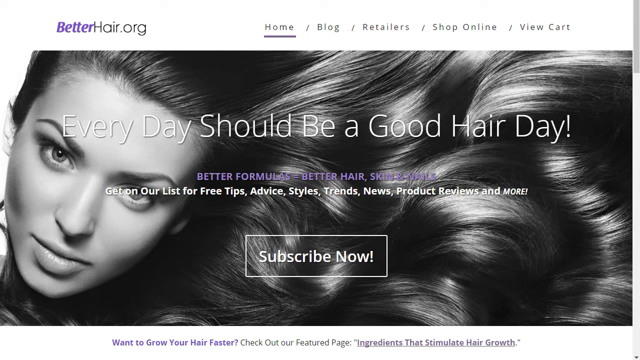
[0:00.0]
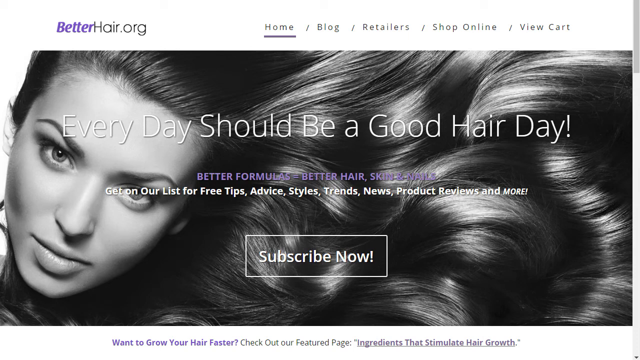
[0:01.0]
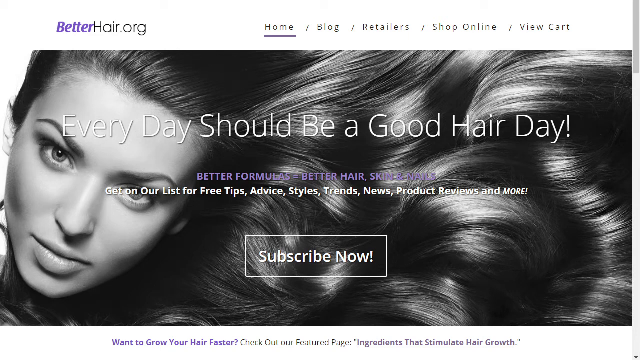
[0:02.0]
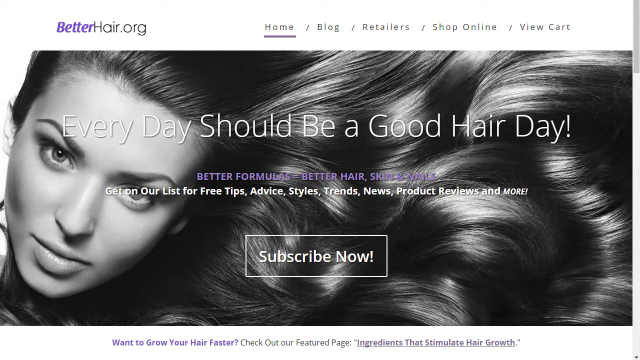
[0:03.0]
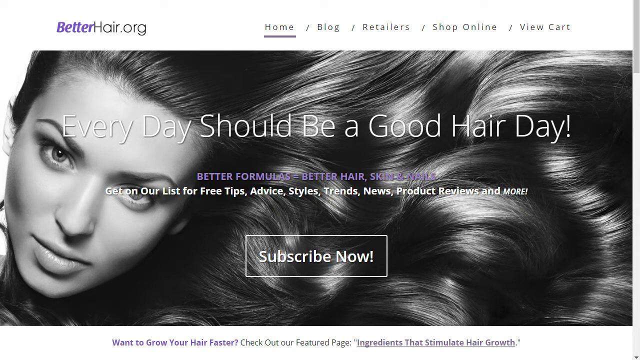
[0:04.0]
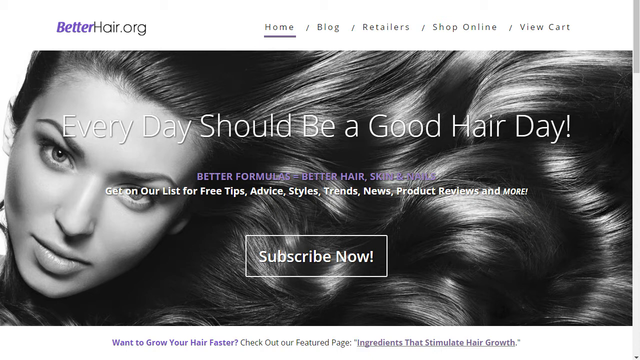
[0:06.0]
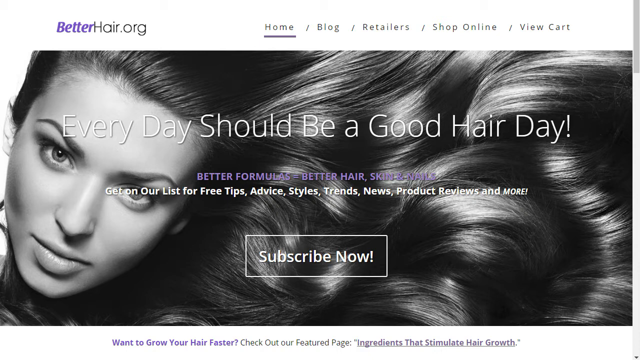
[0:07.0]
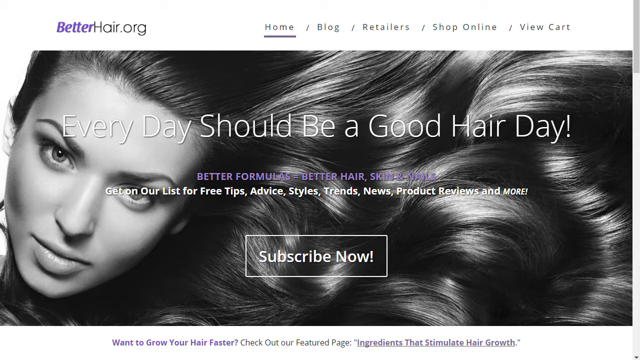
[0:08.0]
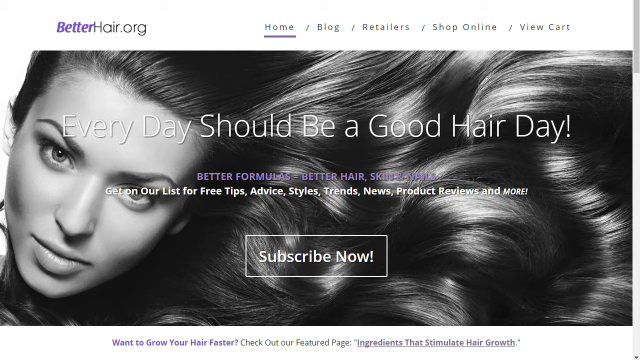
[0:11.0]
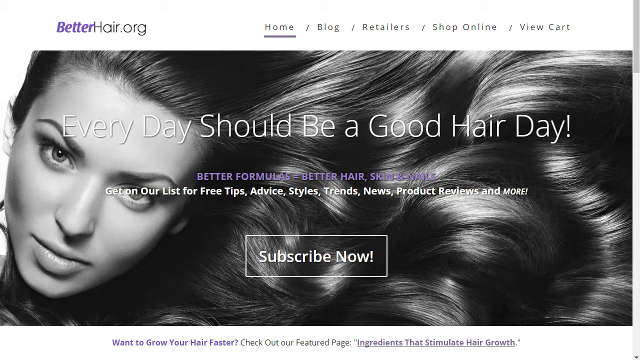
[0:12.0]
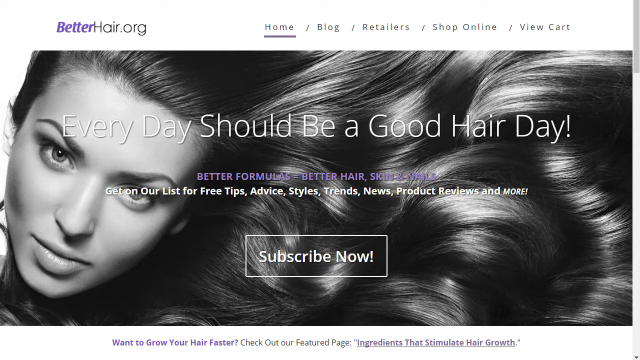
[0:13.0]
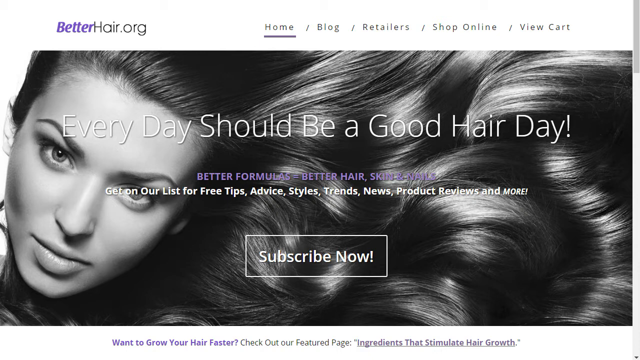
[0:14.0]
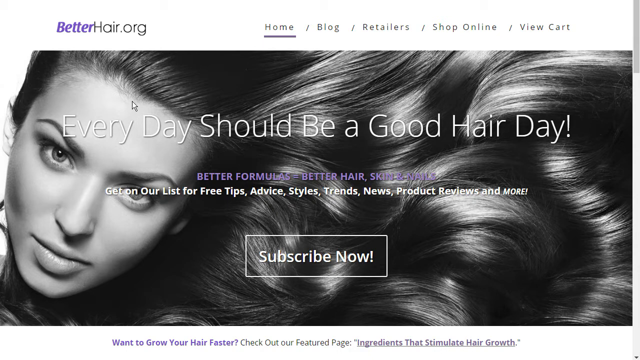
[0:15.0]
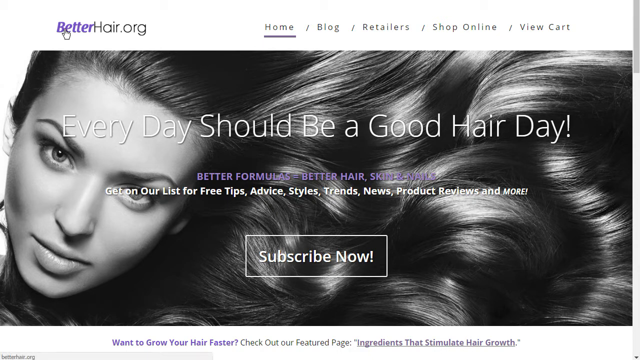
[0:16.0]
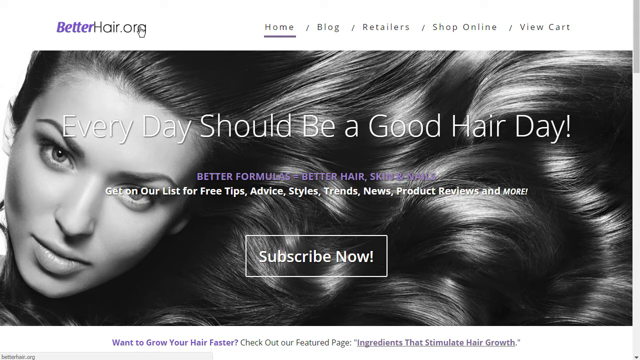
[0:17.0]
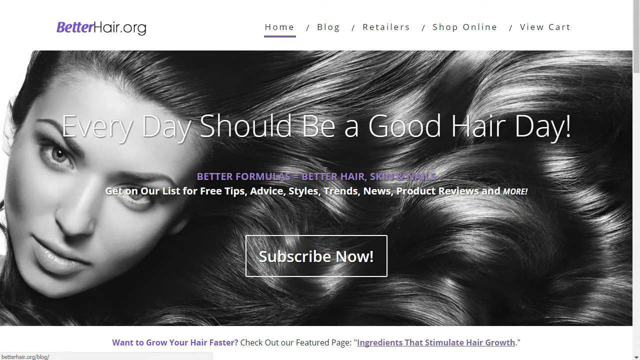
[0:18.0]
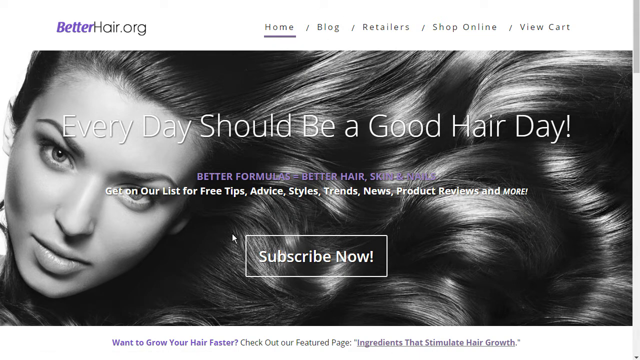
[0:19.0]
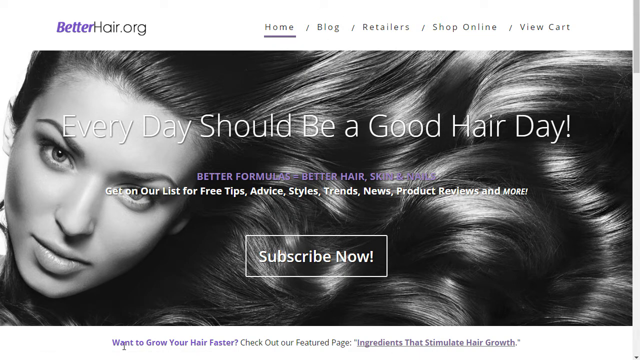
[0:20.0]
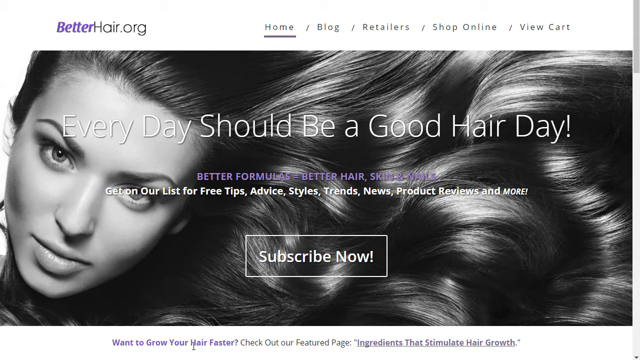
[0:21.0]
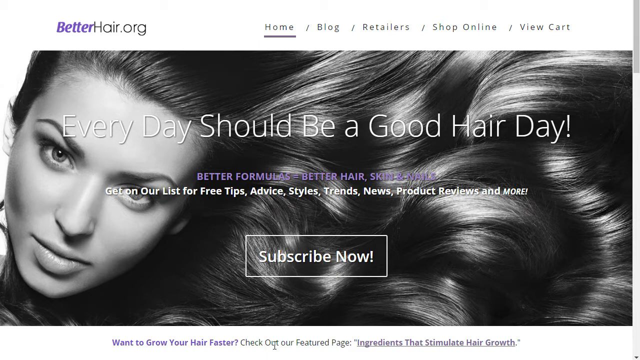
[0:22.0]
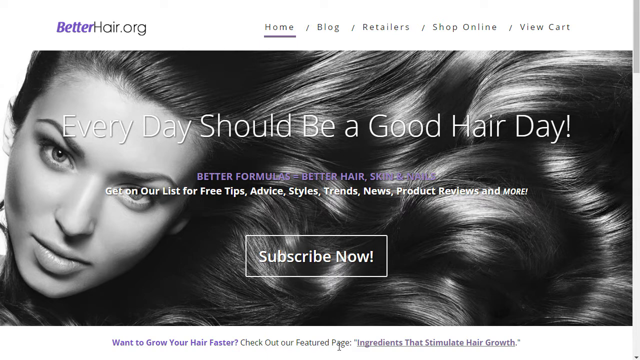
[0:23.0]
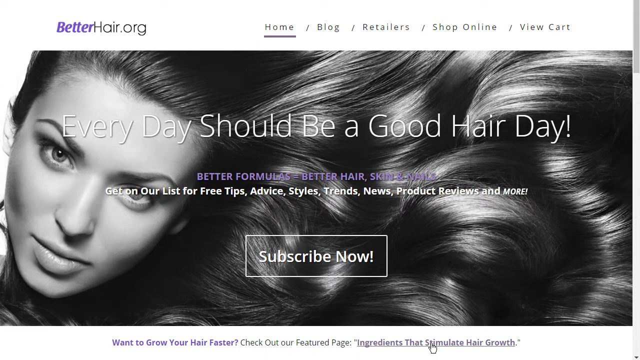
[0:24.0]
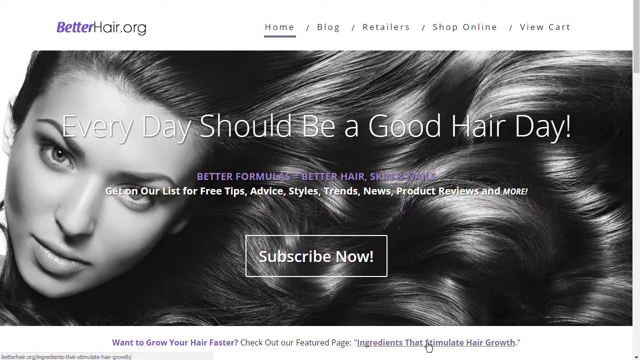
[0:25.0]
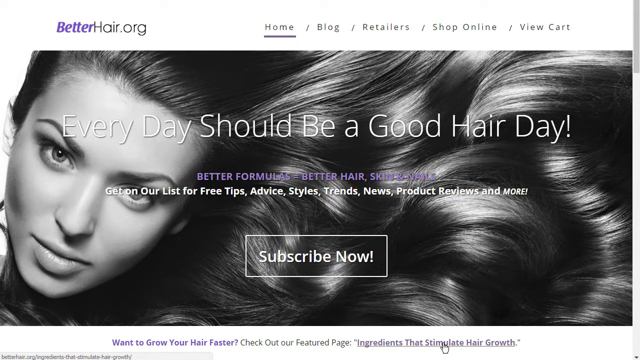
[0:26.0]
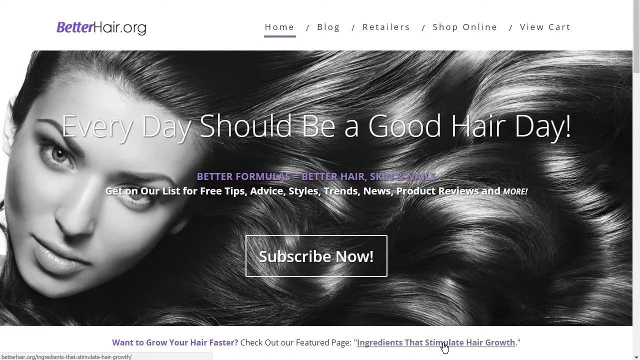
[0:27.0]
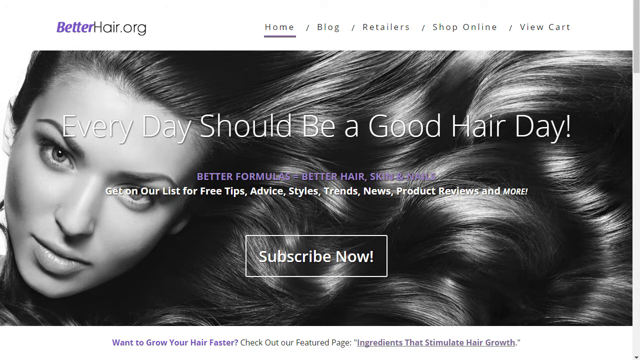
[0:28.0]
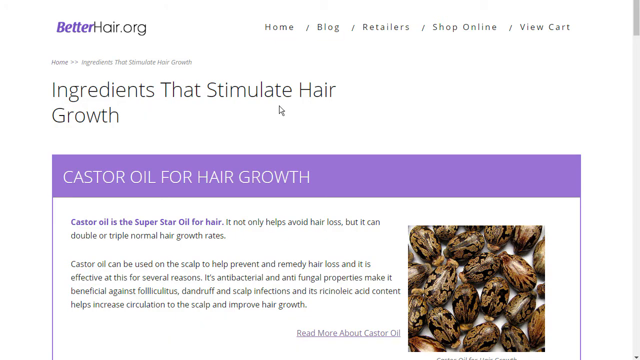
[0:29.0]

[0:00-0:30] The video opens on a website called betterhair.org. There is a picture of a lady with very beautiful, very big and healthy hair, along with the words "every day should be a good hair day." The words "subscribe now" appear in a very big rectangular box, and more words on the site read "home," "blog," "retailers," "shop online" and "view cart." A cursor appears on screen and hovers over "betterhair.org," then over "subscribe now," and then over the words "want to grow your hair faster." It then clicks a link that says "ingredients that stimulate hair growth." The view switches to an article on the same blog titled "ingredients that stimulate hair growth," followed by the words "castor oil for hair growth" in a white font on a purple background. The article centers on using castor oil to grow hair.